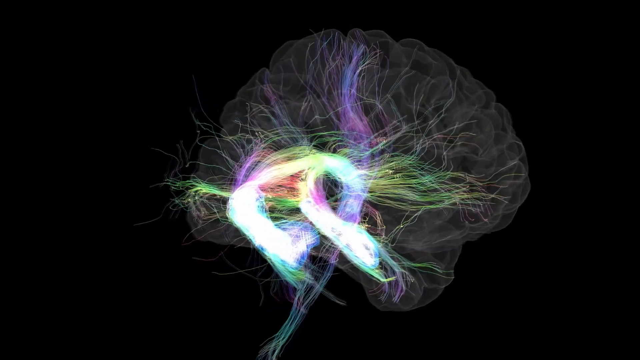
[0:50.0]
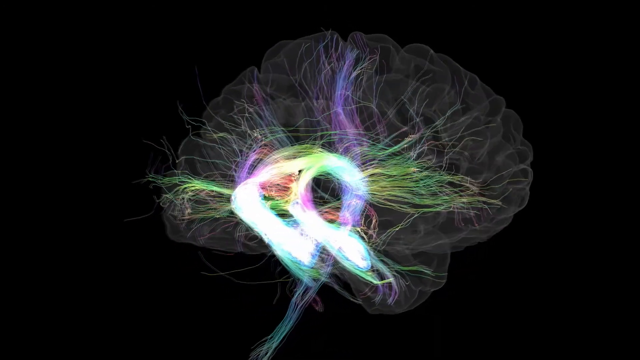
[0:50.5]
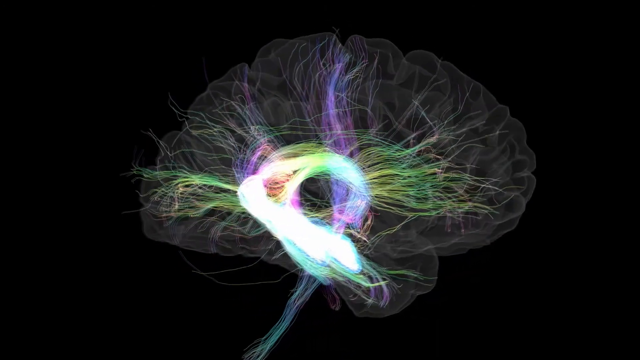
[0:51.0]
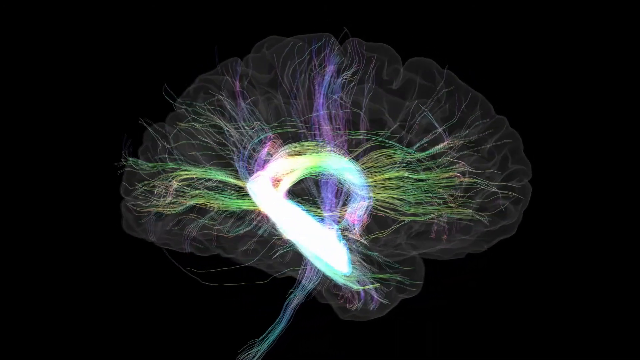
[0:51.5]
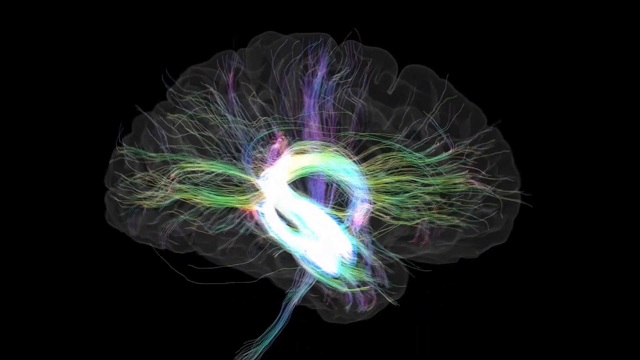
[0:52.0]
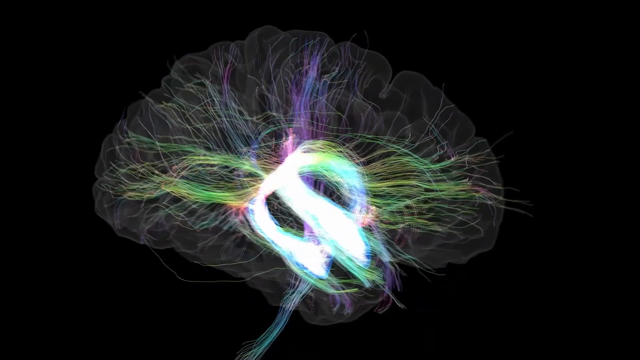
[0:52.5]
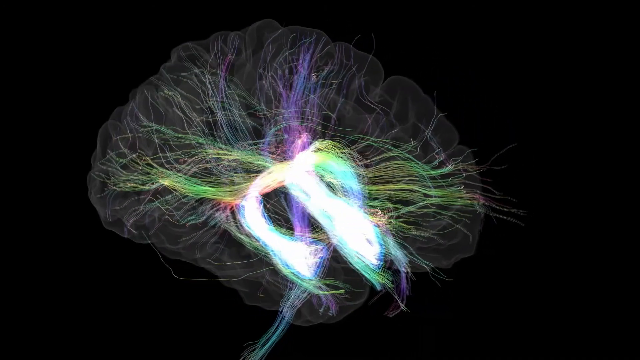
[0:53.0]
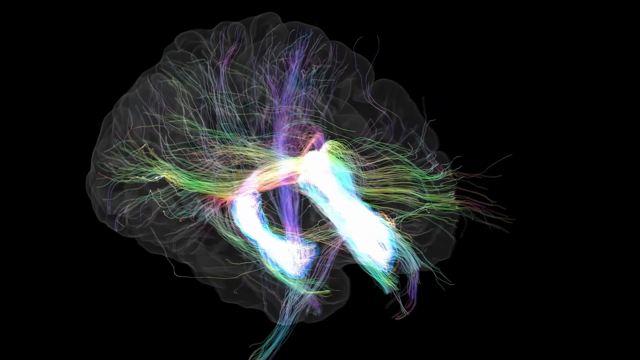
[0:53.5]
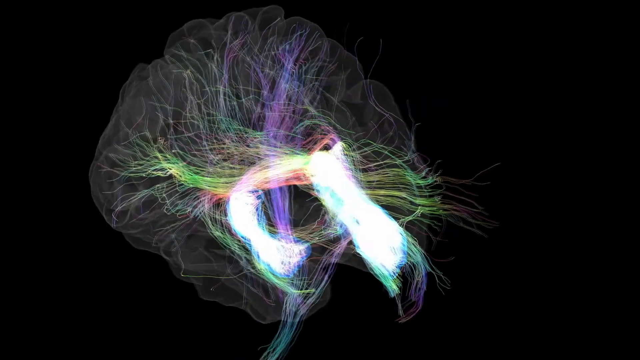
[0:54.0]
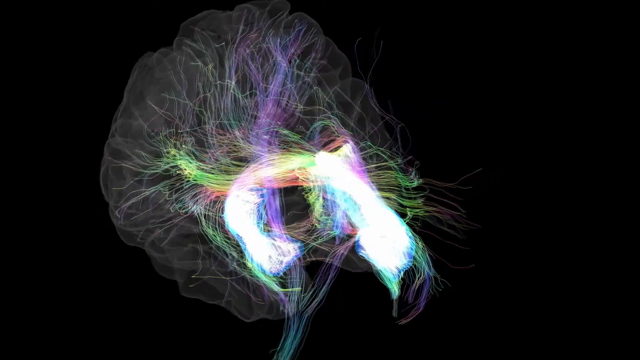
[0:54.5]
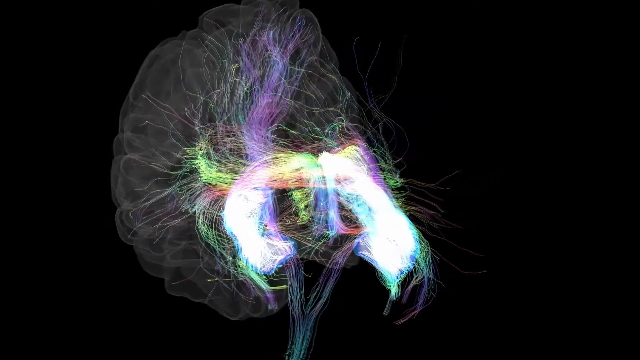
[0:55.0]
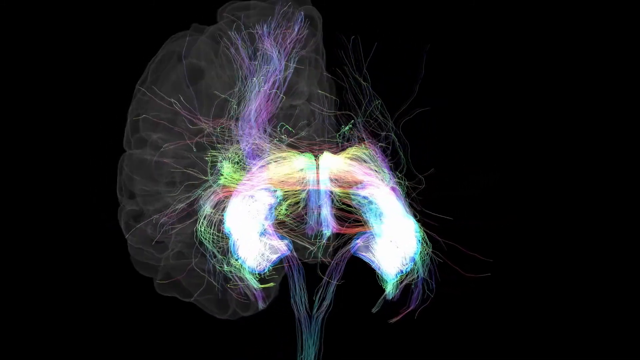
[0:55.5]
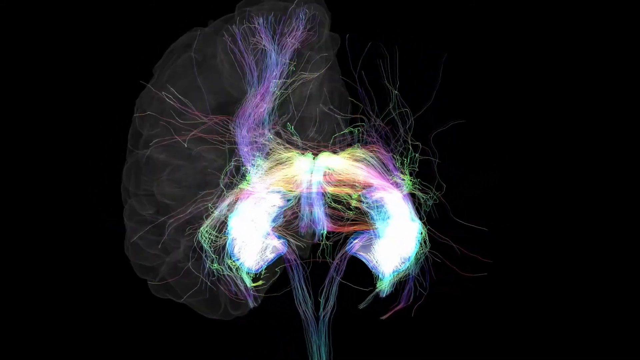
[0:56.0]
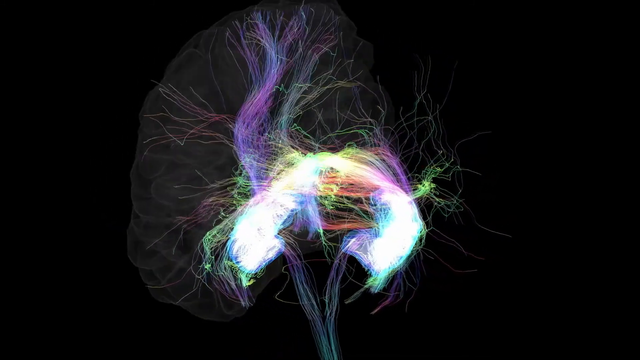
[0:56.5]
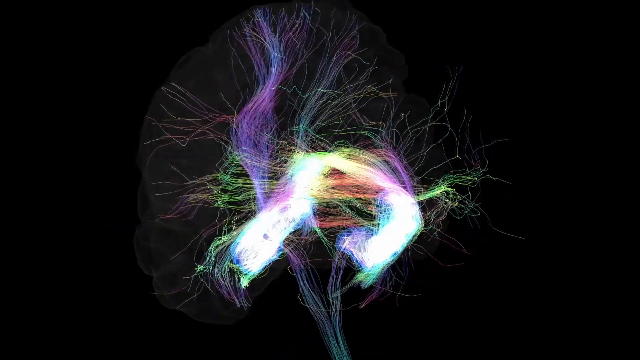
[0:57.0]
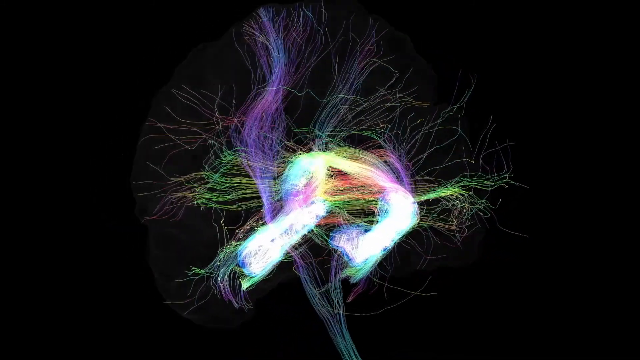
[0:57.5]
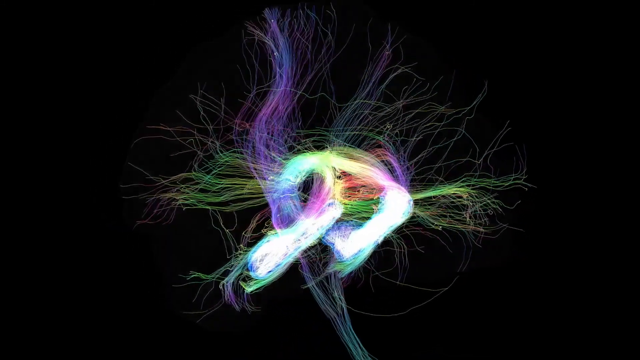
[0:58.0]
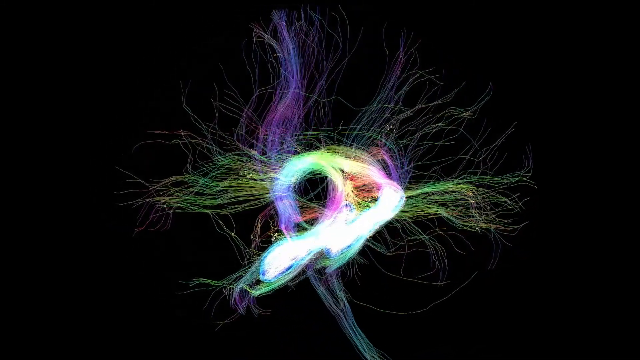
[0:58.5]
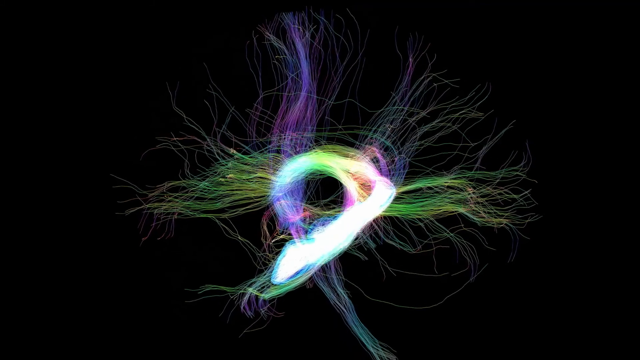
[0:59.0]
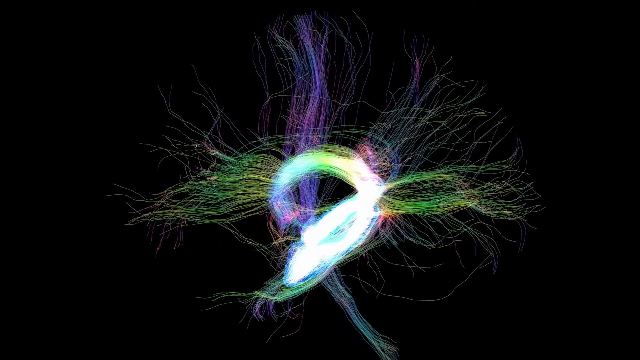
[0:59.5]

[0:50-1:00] The computer rendering of the brain continues, with a transparent exterior shown against the black background. The structure rotates clockwise, the angle sometimes changing so that the camera appears to be slightly above the brain. In the center of the brain are the brightly colored tendrils. Their central thick structure is very white with a slight blue hue, and thinner strands emerge from it in greens and purples. The bright central part of the tendrils begins at the base of each hemisphere, curves up backwards into the middle where the two sides connect, and then carries forward, with tendrils reaching out from there into other parts of the brain.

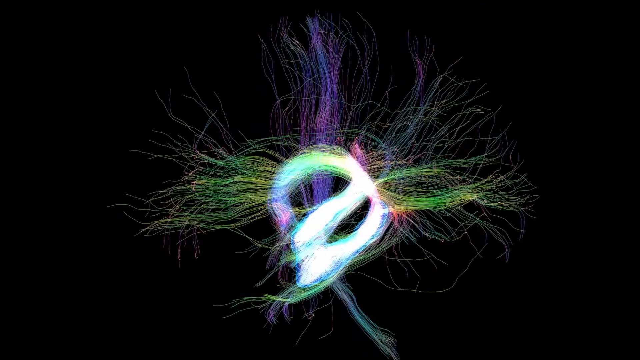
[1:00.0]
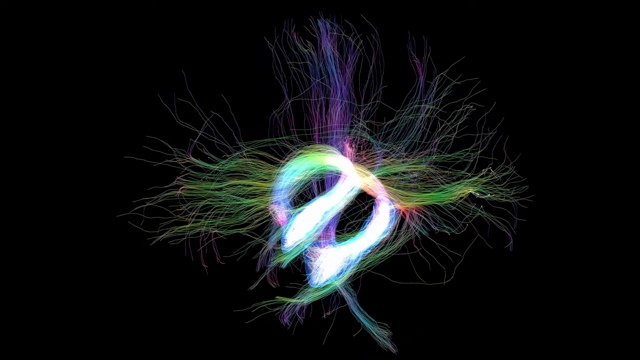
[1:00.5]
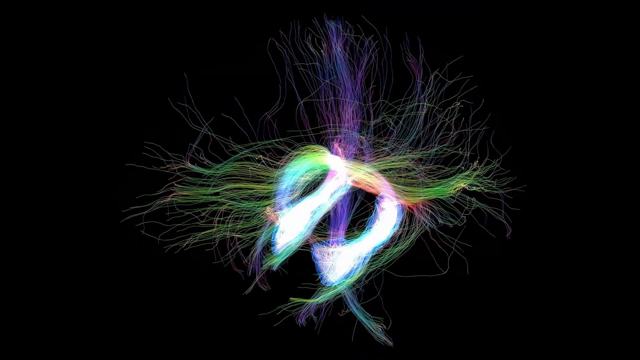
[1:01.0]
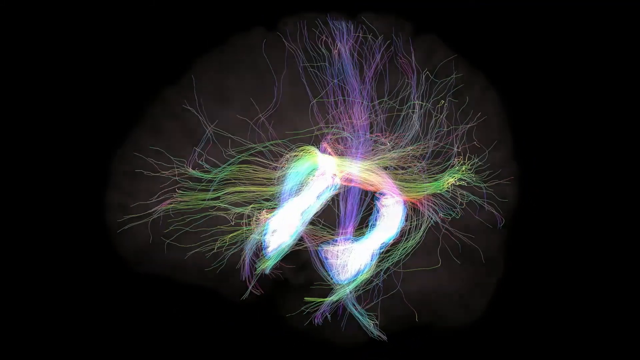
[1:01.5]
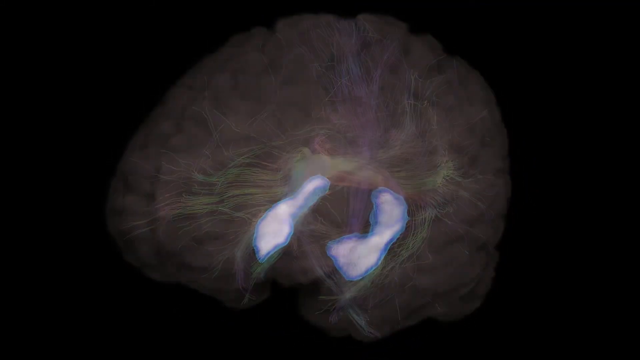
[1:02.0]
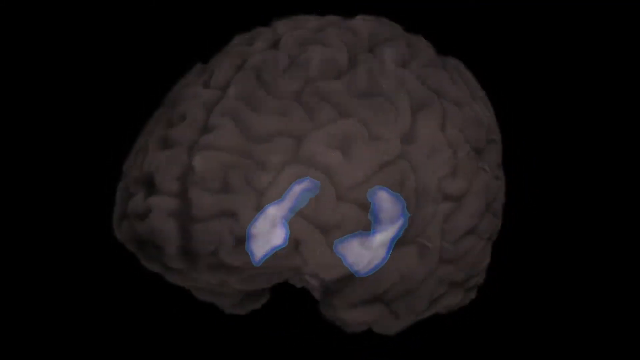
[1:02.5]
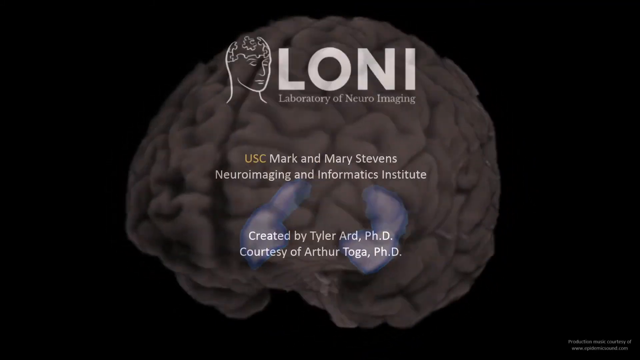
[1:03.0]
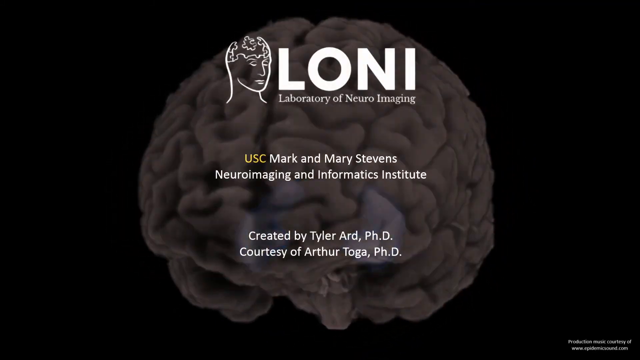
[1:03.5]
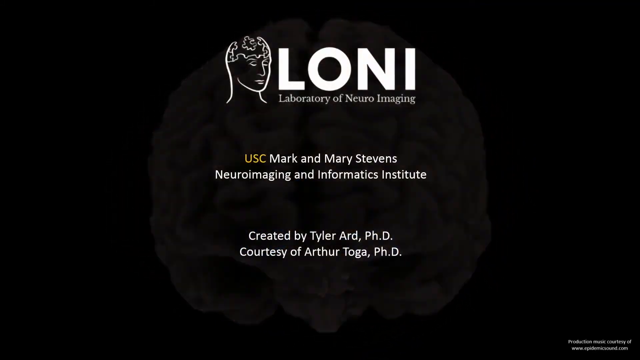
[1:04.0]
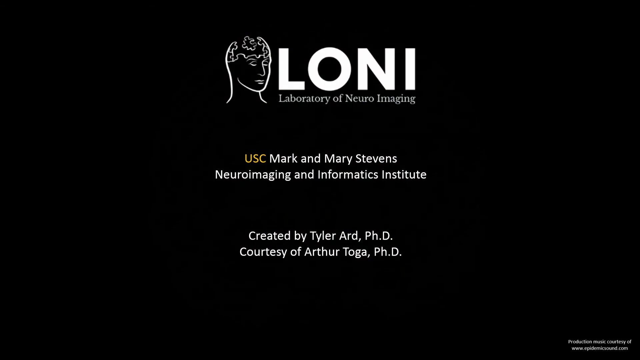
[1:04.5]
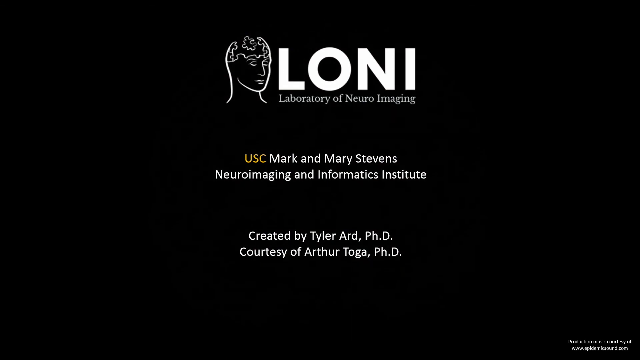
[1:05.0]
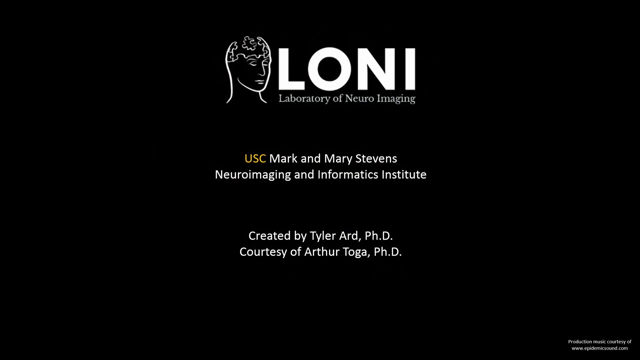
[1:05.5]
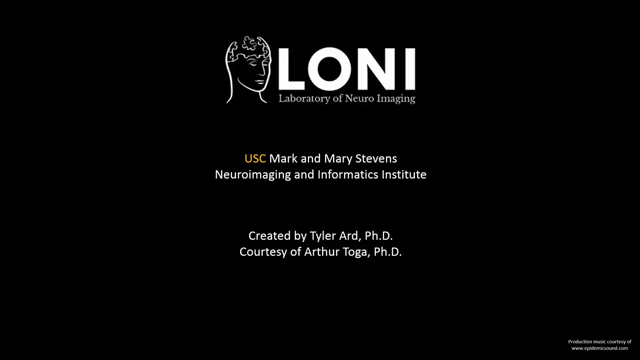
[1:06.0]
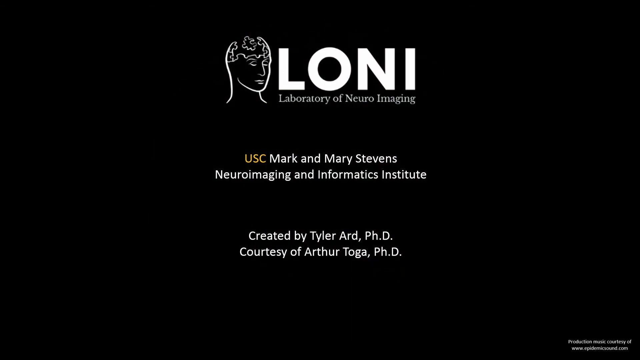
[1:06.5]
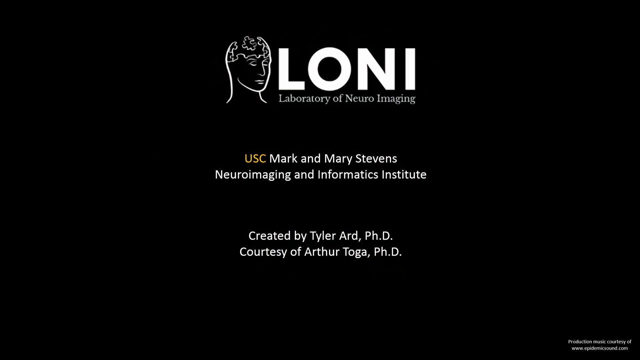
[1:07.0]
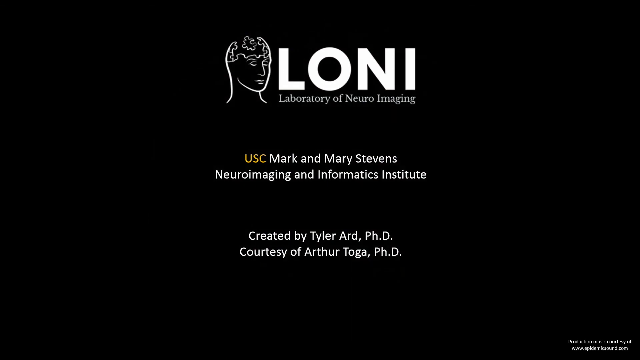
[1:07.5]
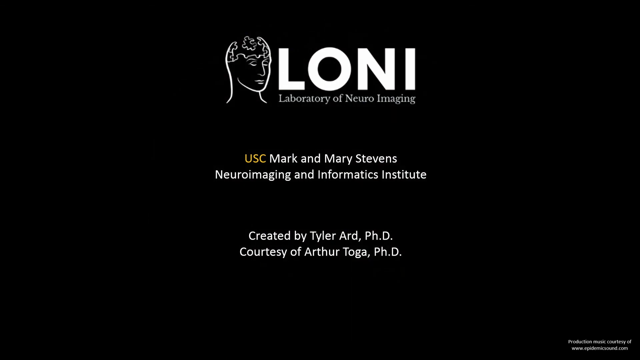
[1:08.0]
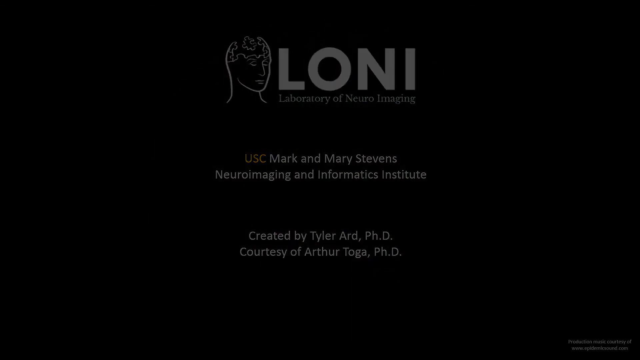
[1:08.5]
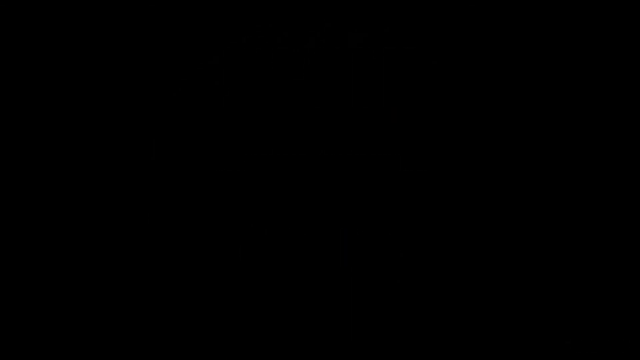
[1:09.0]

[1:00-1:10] Once again only the multi-colored bright tendrils are shown, set against a completely black background and rotating counter-clockwise. As they rotate, the structure of the brain's exterior begins to appear superimposed on top of the tendrils. The tendrils then disappear, leaving just the focused areas of whiteness where they begin at the base of each hemisphere on either side. As the brain turns clockwise towards the viewer, writing appears on screen and the image of the brain fades to black. At the top of the screen the writing reads "LONI" with "Laboratory of Neuroimaging" beneath it. To the left of this lettering is a line drawing of a human face with sections of the head missing, as if removed like a jigsaw. Below, in the center of the screen, text reads "USC Mark and Mary Stevens, Neuroimaging and Informatics Institute", followed by two further lines: "Created by Tyler Ard Ph.D." and "Courtesy of Arthur Toga Ph.D." Small text at the bottom reads "Production Music Courtesy of www.epidemicsound.com". The image stays for several seconds before fading to black.